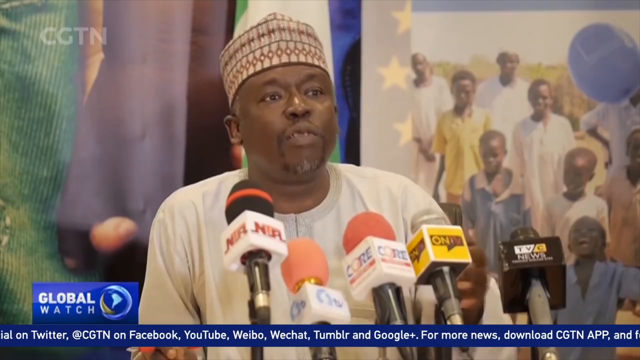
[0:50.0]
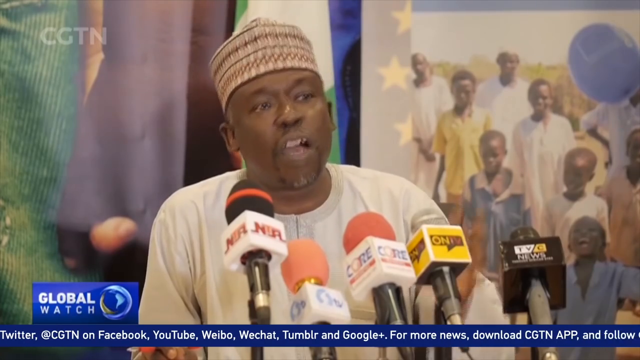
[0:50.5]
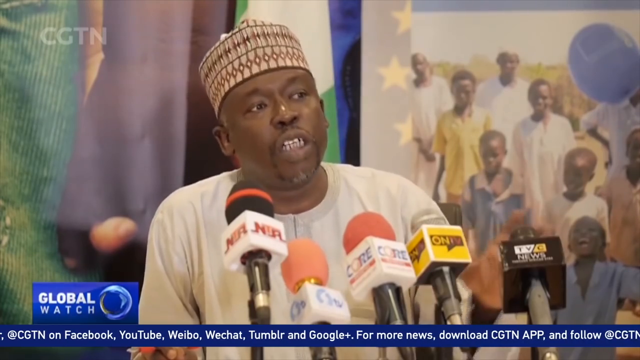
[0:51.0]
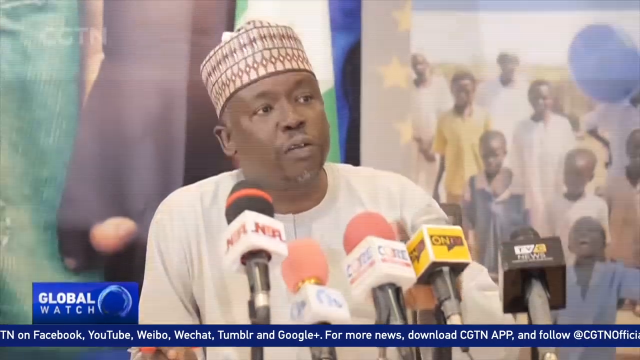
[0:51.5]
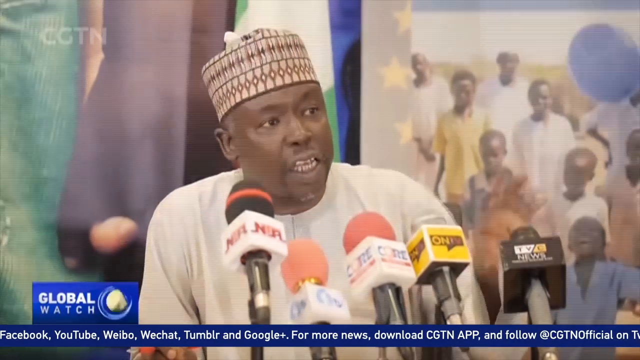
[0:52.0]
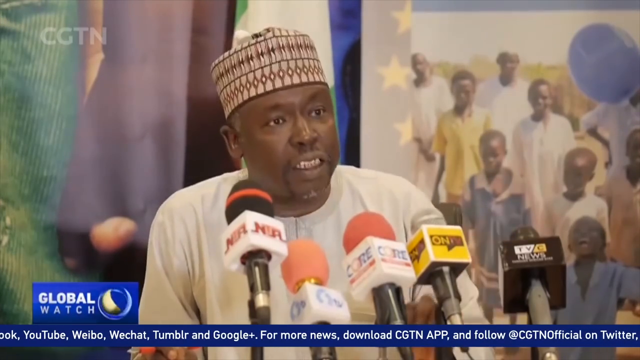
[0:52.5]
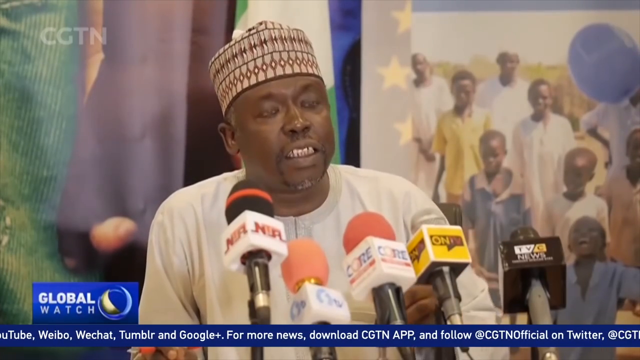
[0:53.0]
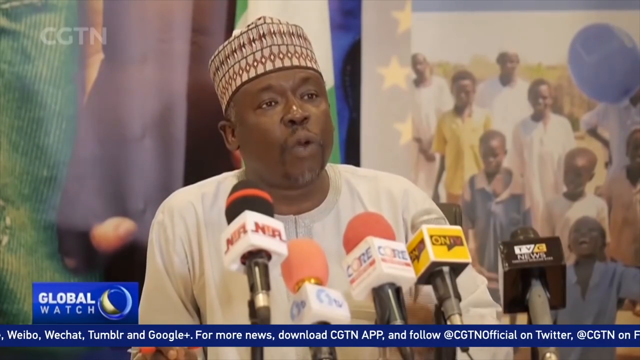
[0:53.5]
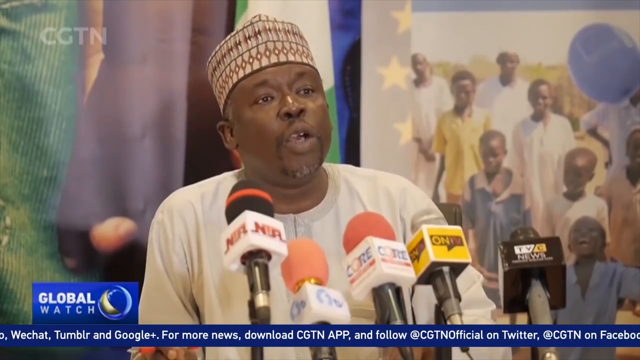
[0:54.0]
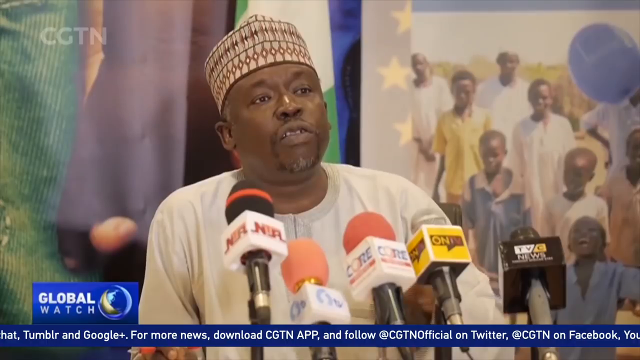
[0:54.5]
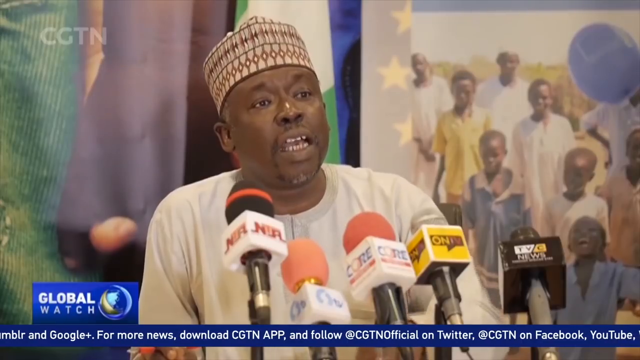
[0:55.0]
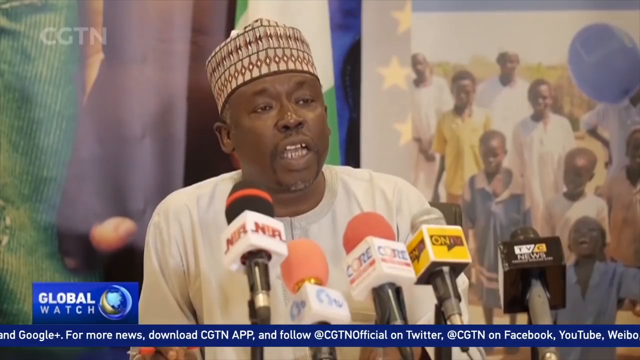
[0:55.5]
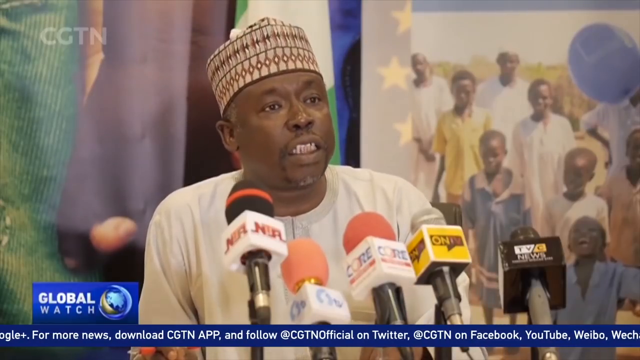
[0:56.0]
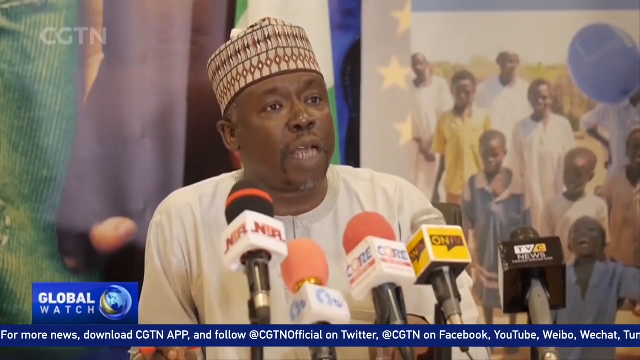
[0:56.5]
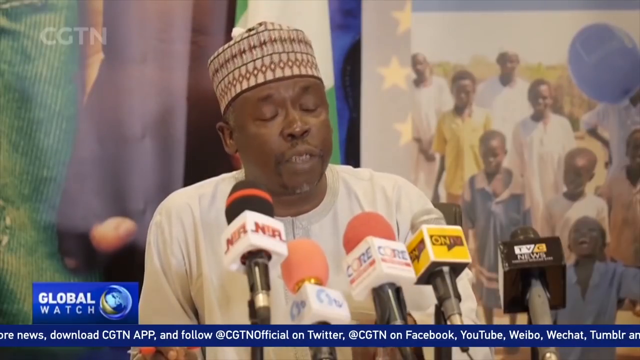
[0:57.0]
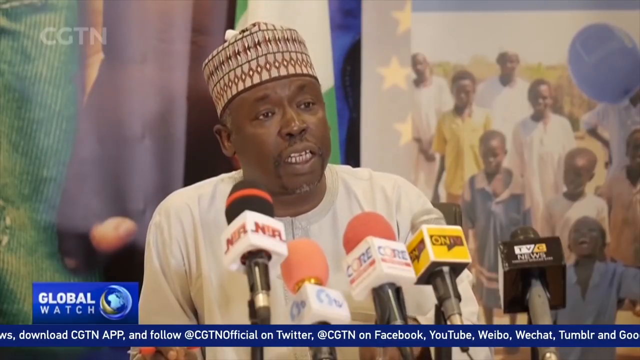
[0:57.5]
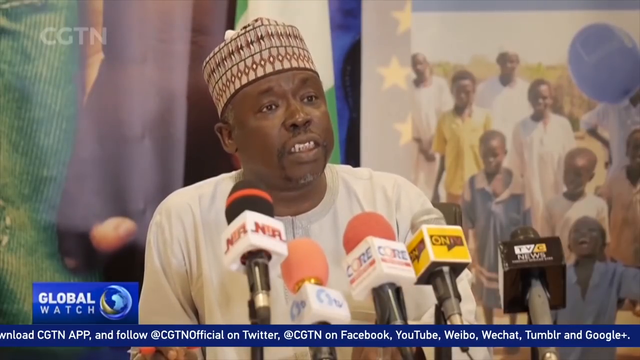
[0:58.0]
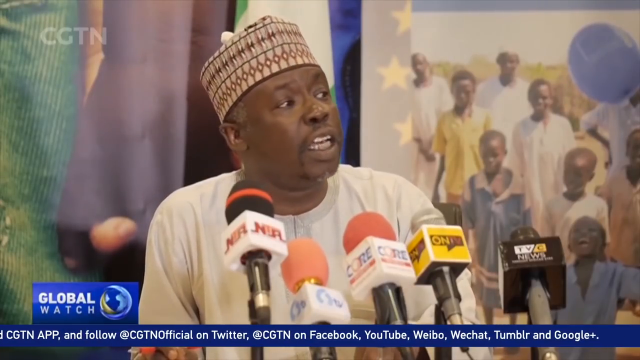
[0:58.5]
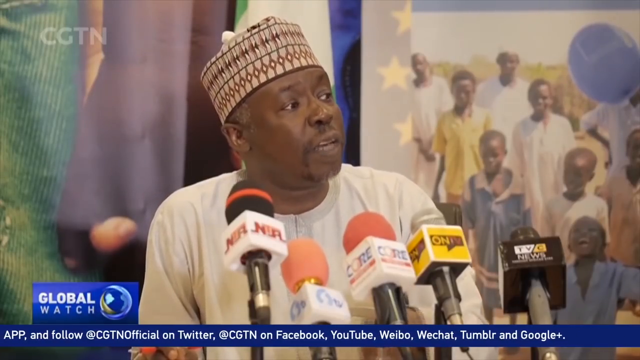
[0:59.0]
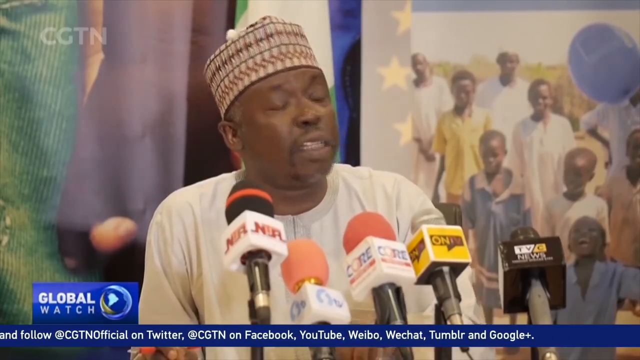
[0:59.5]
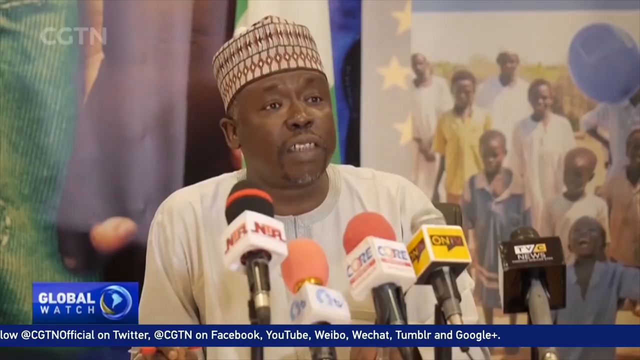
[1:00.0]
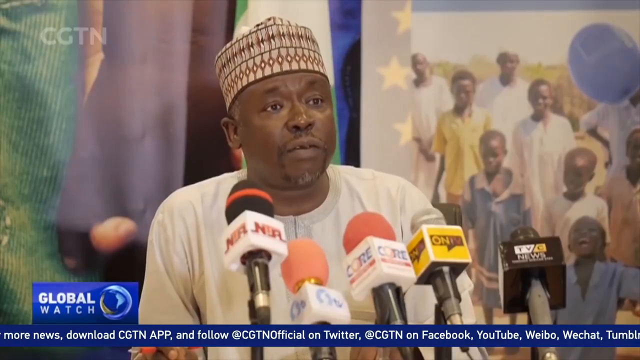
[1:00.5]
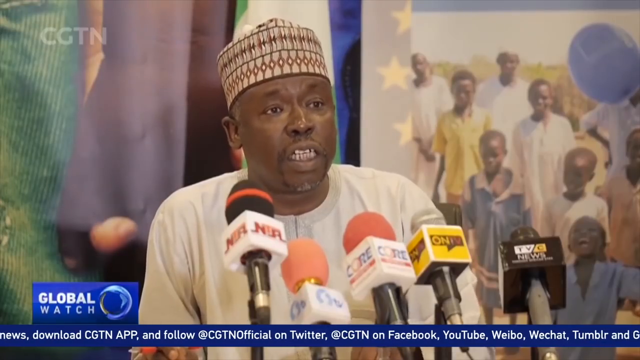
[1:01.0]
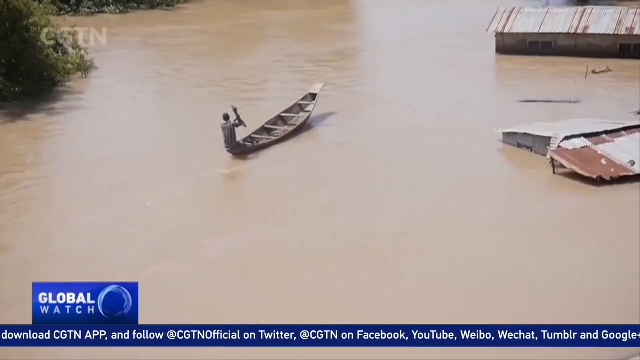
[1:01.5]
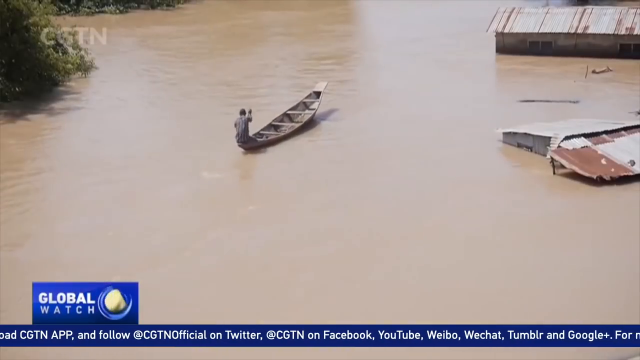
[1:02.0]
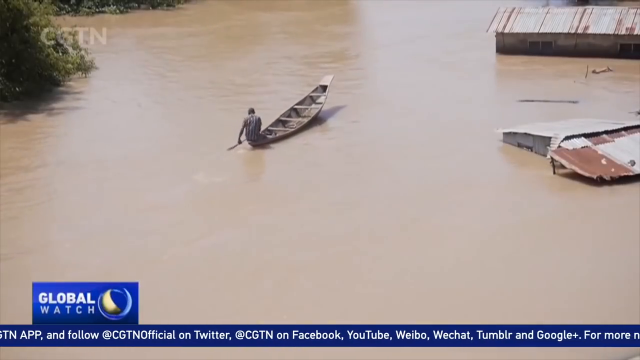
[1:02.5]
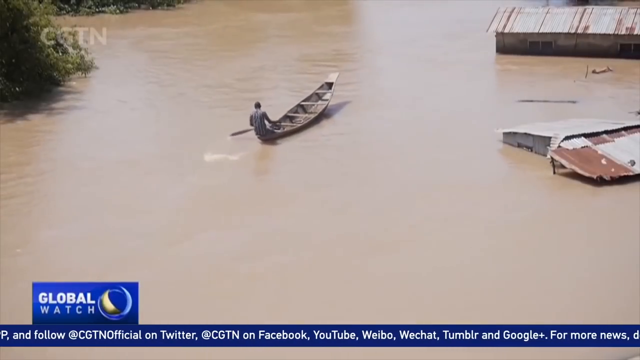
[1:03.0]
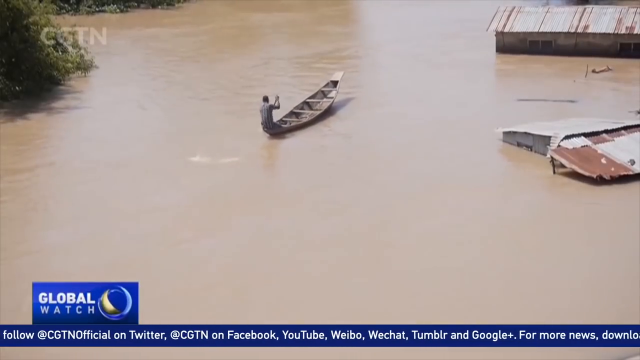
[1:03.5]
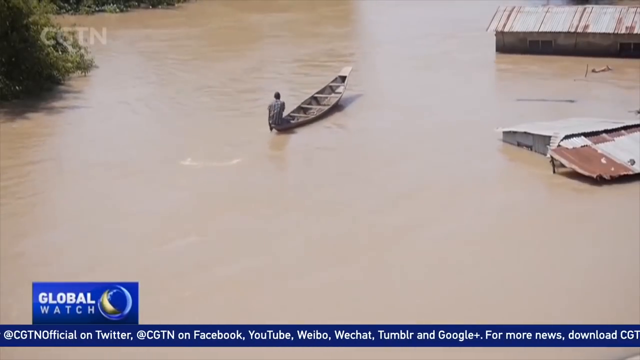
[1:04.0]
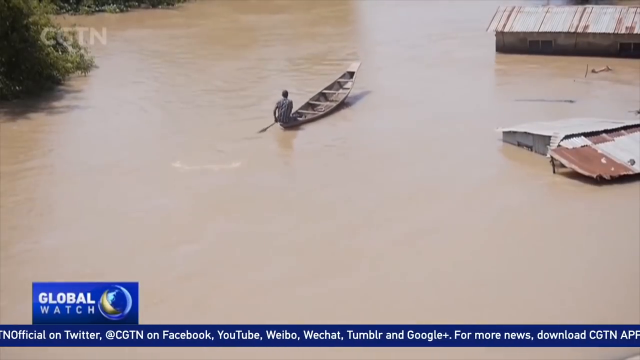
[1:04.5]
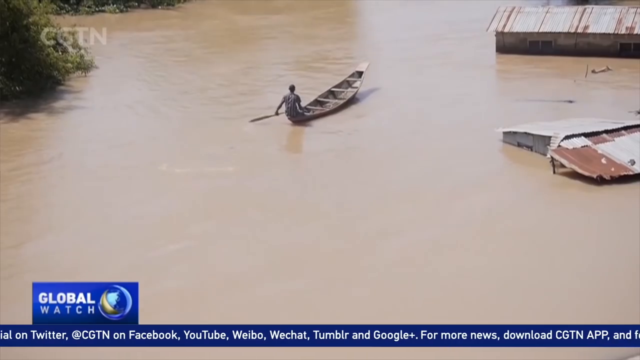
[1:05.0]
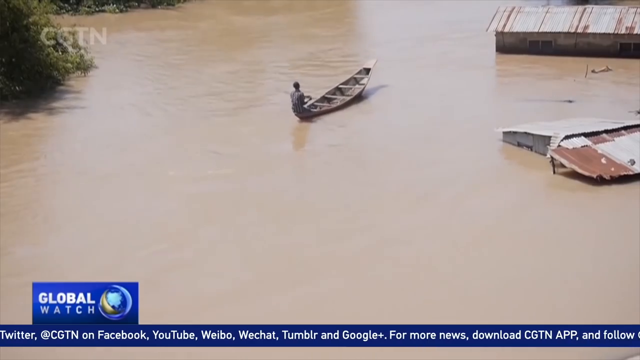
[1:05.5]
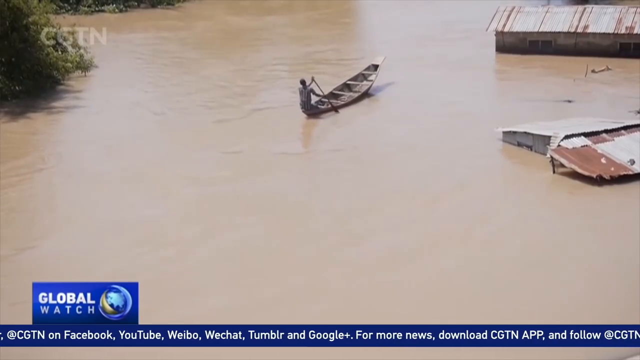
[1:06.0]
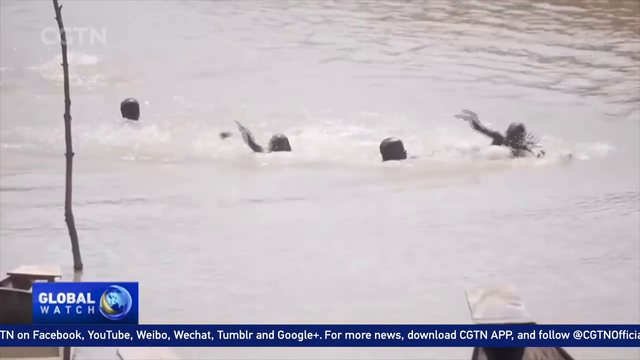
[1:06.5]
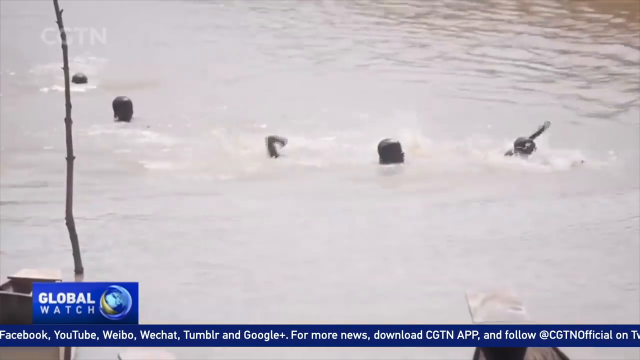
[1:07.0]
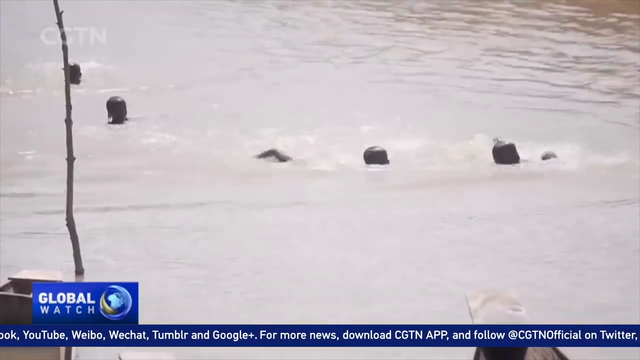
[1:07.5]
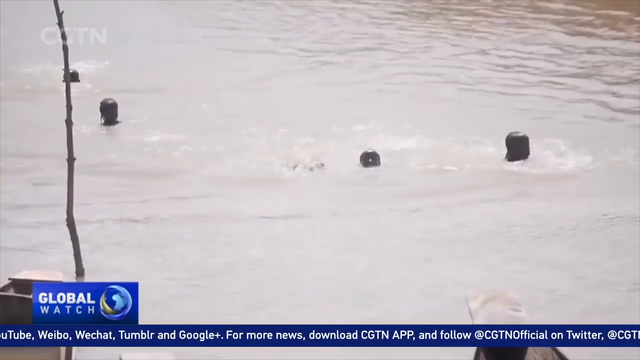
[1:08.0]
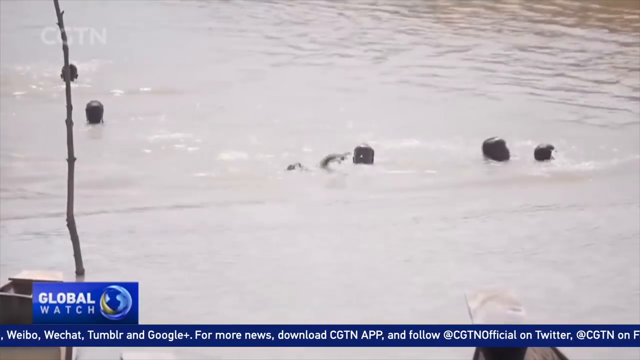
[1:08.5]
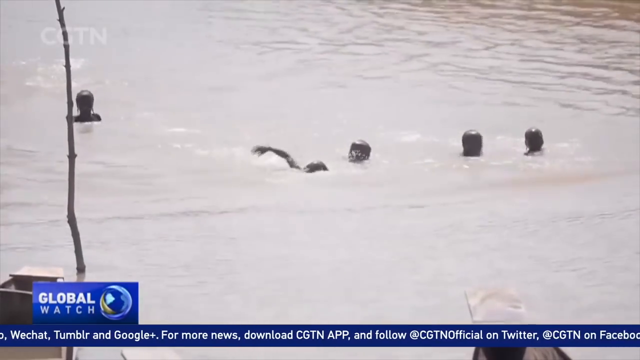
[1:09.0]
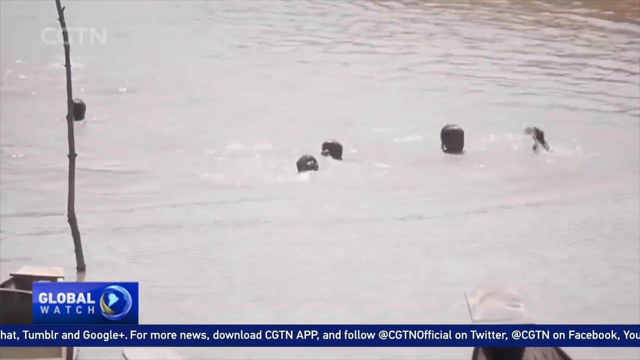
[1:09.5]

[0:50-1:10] Mustafa Malihaja, the director of NIMA, speaks at a press conference. He is a middle-aged man wearing Nigerian headgear and a white hijab, standing in front of a podium with multiple microphones from different news channels. Flashes of light hit his face while he talks, apparently from cameras. Behind him is a background picture of children. A man then maneuvers a canoe through an area where only the rooftops of the houses are visible, and people are swimming in the deep water.